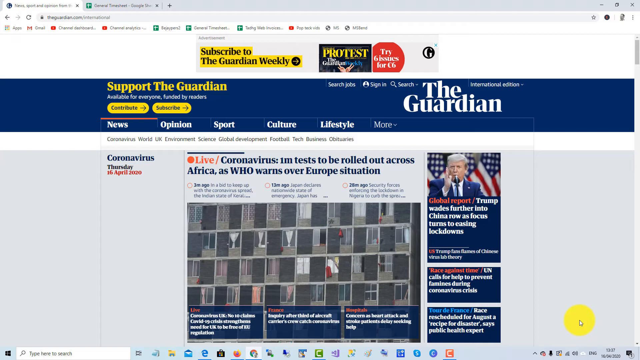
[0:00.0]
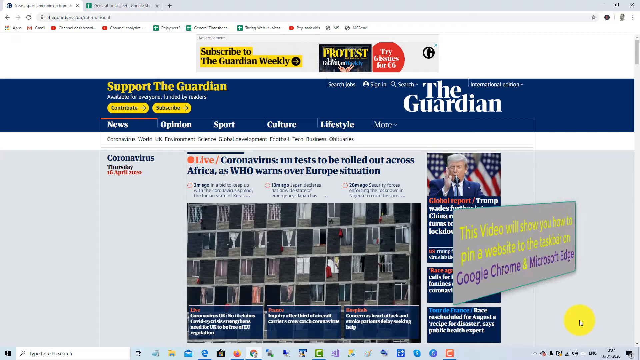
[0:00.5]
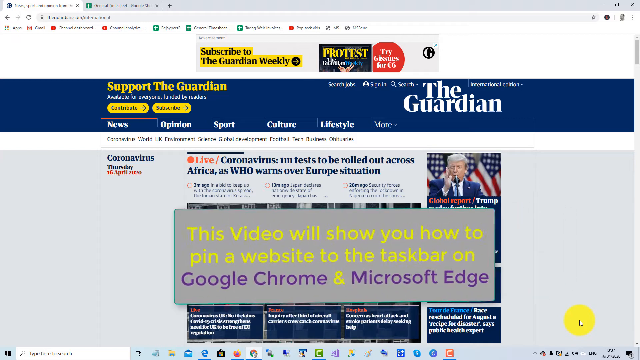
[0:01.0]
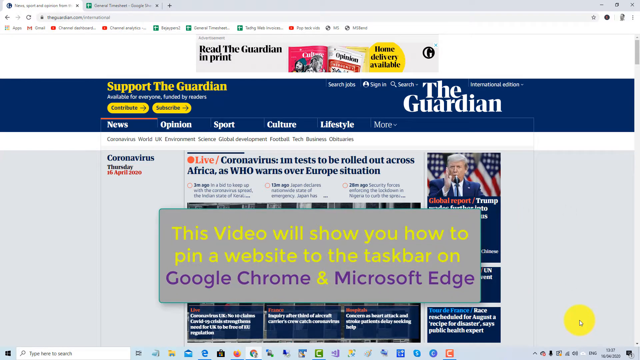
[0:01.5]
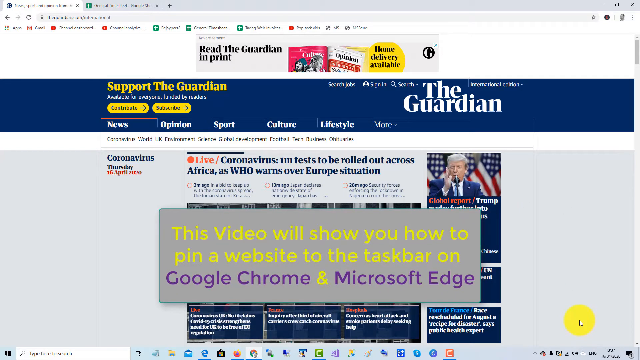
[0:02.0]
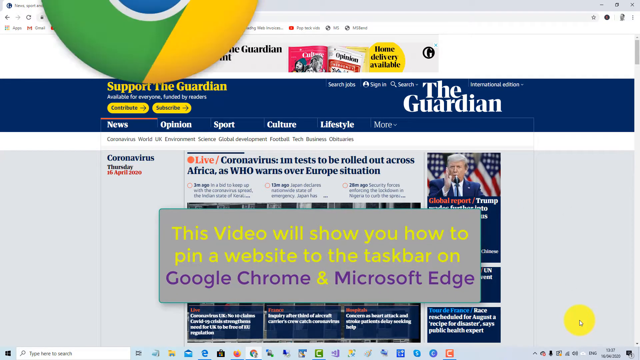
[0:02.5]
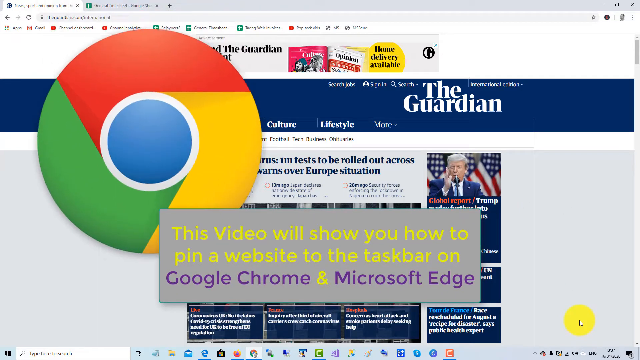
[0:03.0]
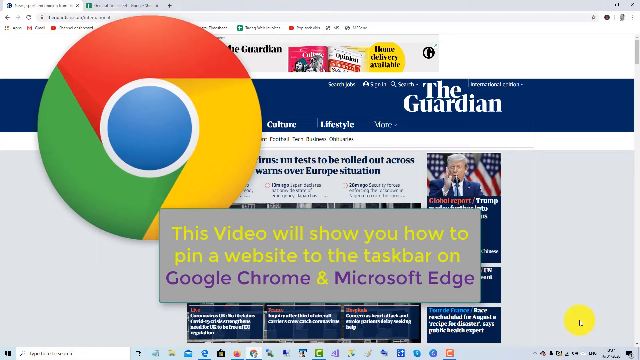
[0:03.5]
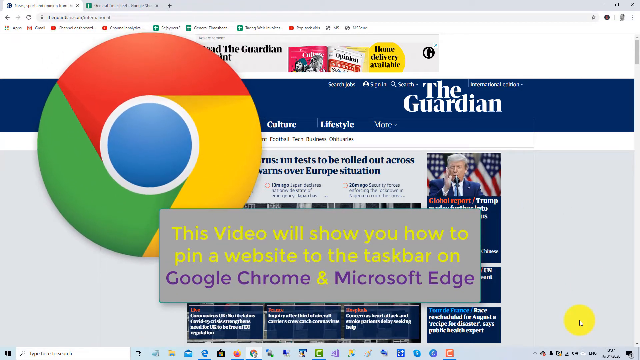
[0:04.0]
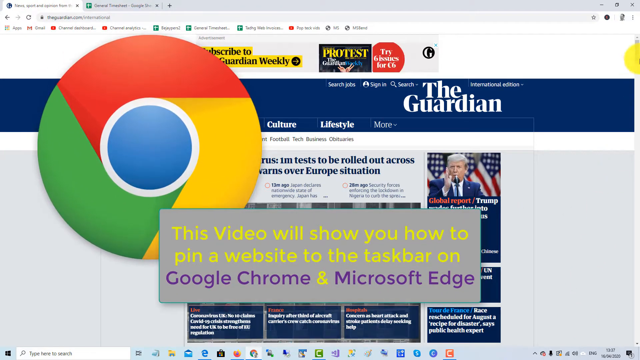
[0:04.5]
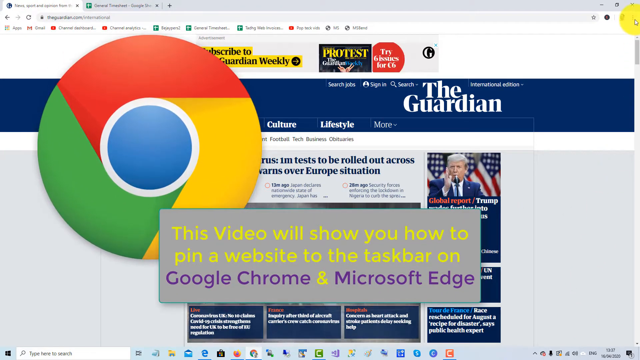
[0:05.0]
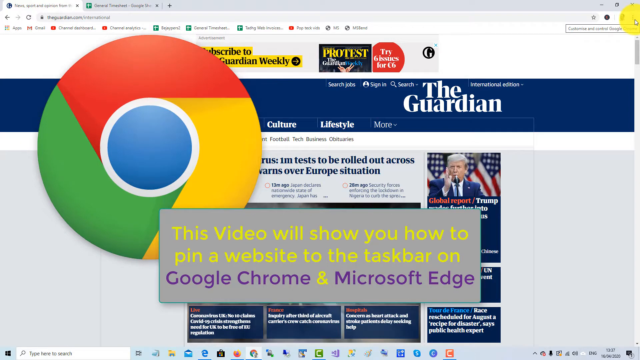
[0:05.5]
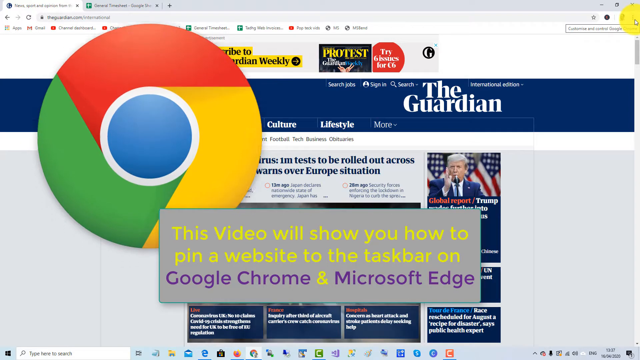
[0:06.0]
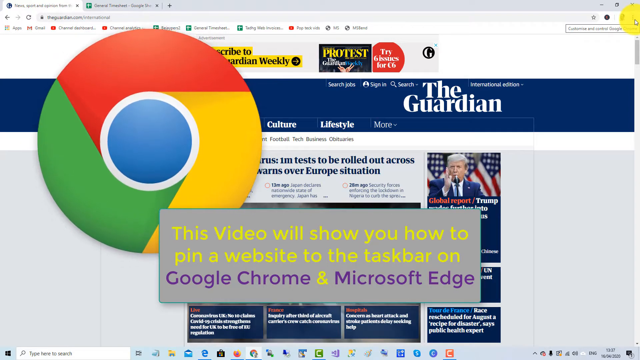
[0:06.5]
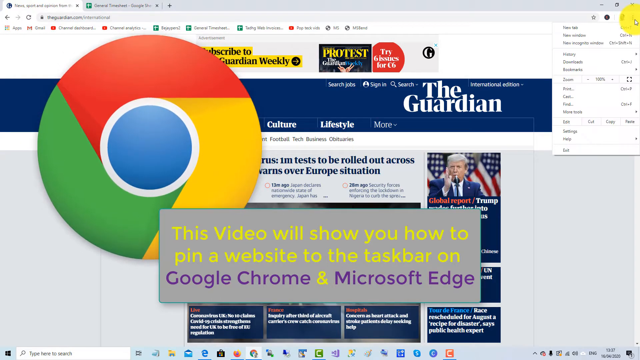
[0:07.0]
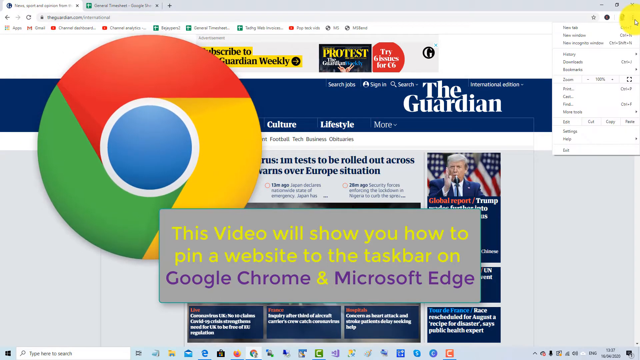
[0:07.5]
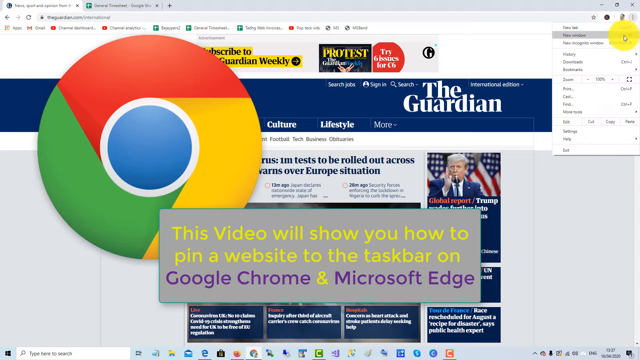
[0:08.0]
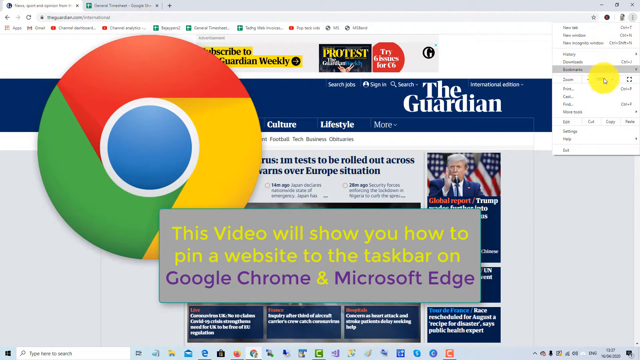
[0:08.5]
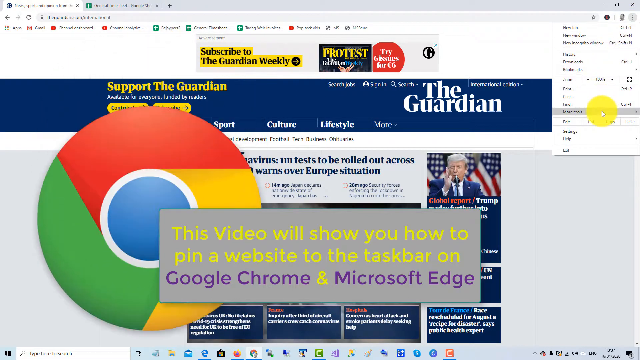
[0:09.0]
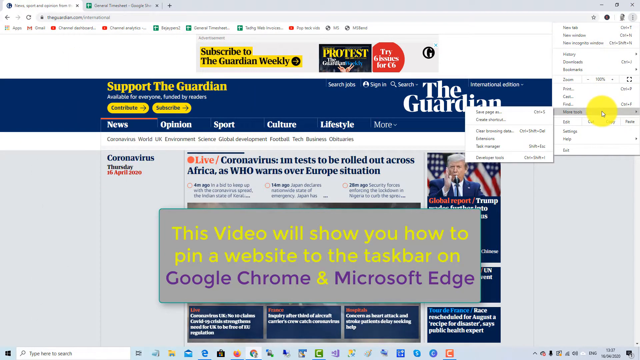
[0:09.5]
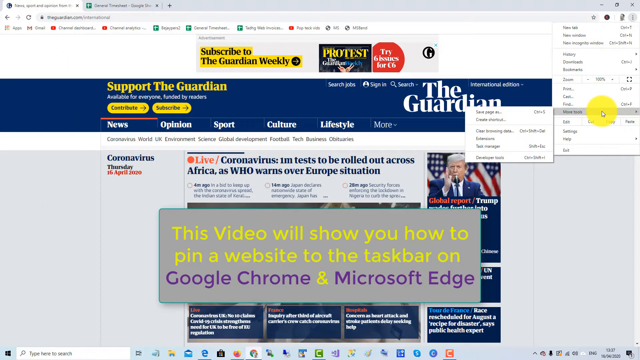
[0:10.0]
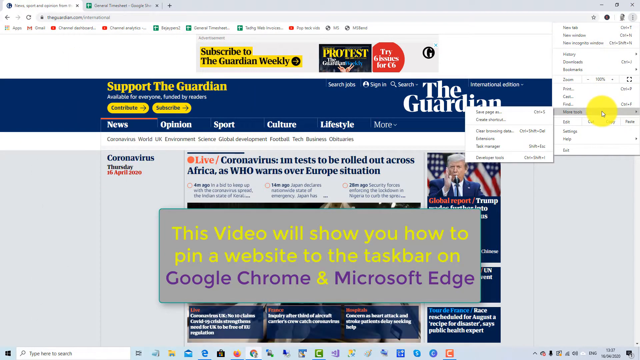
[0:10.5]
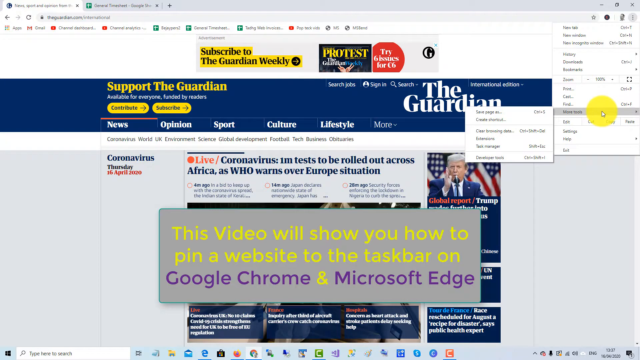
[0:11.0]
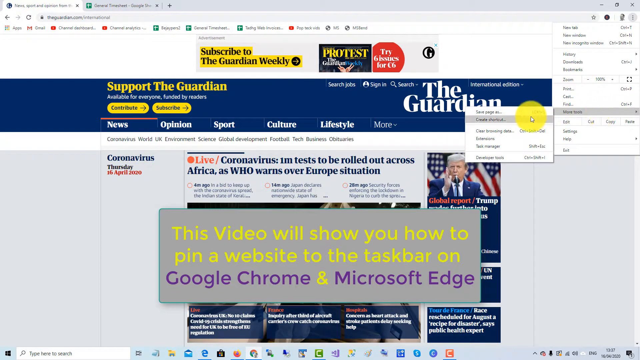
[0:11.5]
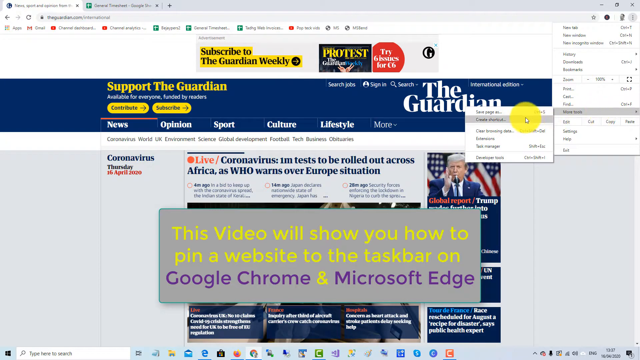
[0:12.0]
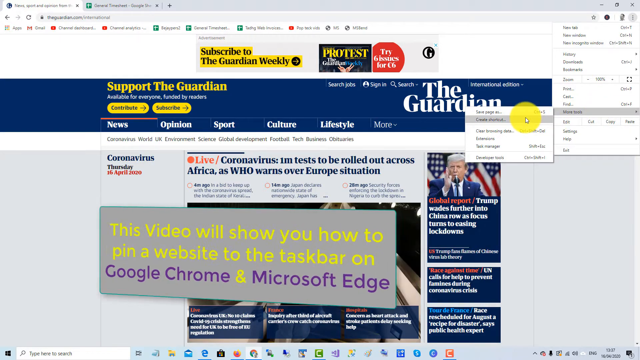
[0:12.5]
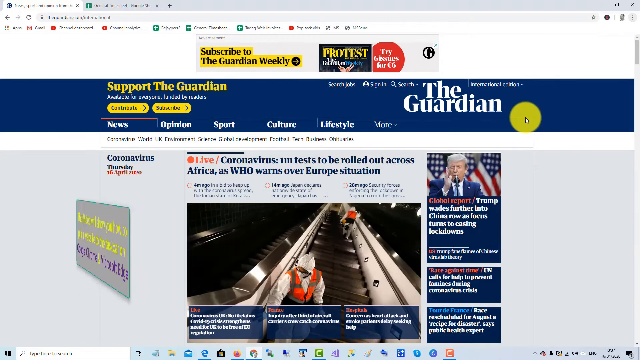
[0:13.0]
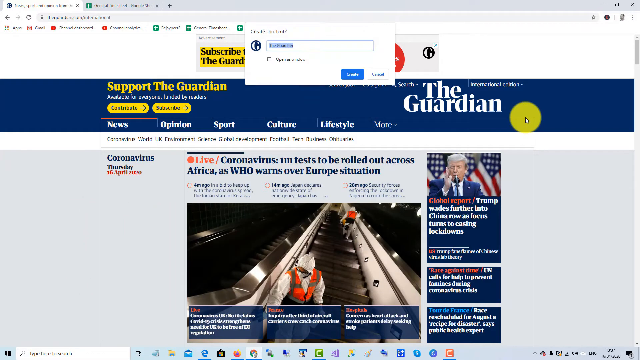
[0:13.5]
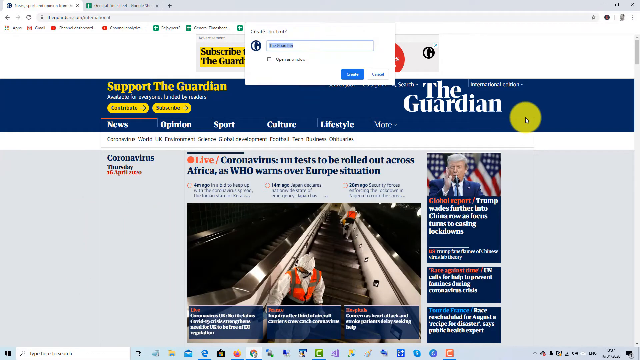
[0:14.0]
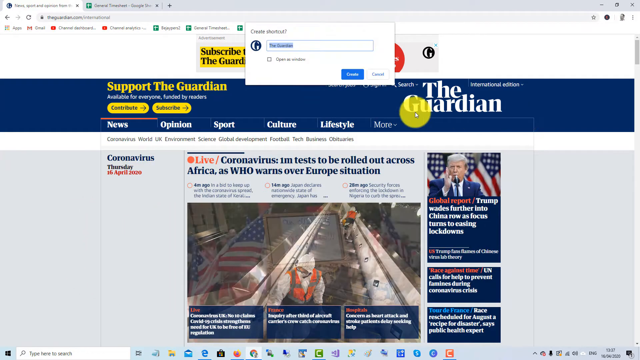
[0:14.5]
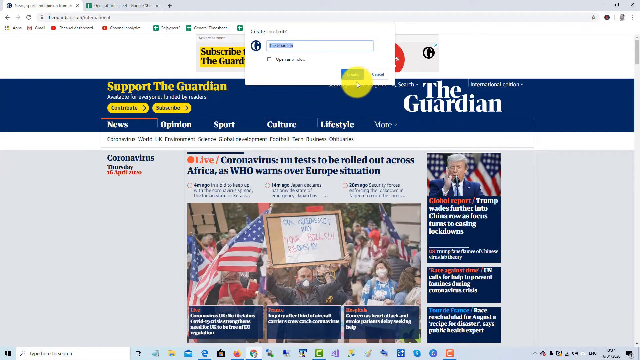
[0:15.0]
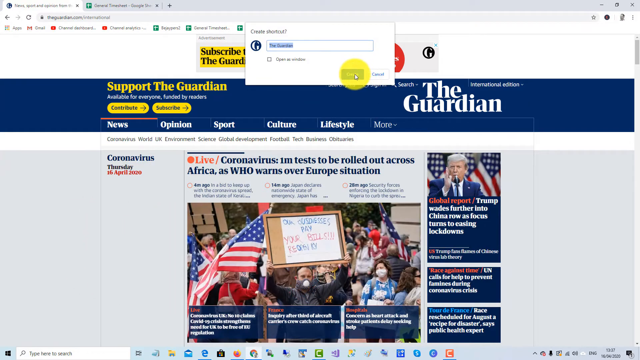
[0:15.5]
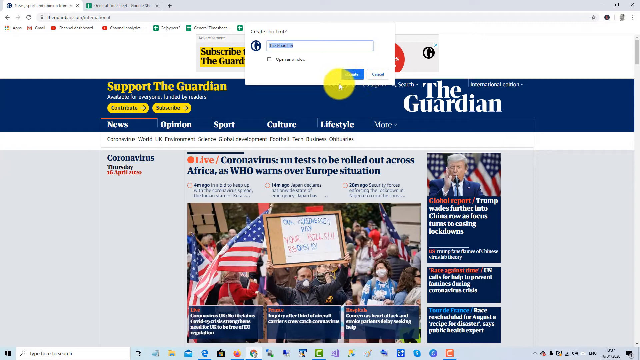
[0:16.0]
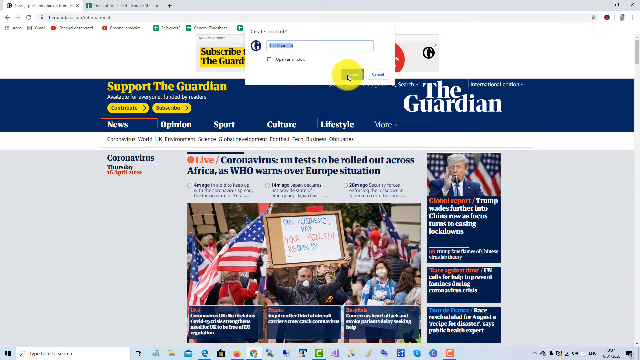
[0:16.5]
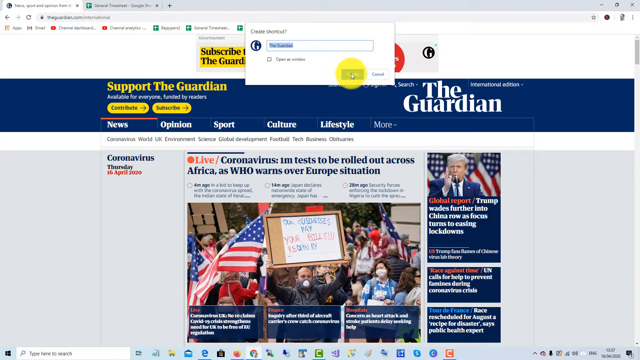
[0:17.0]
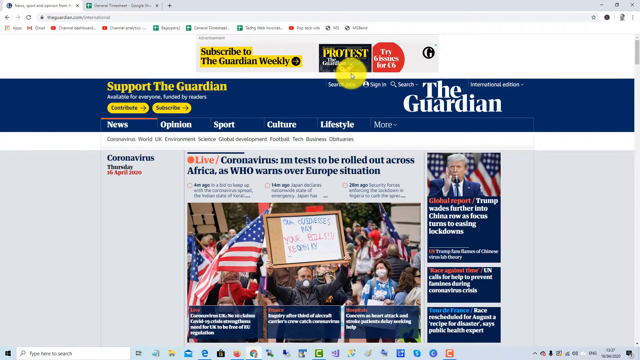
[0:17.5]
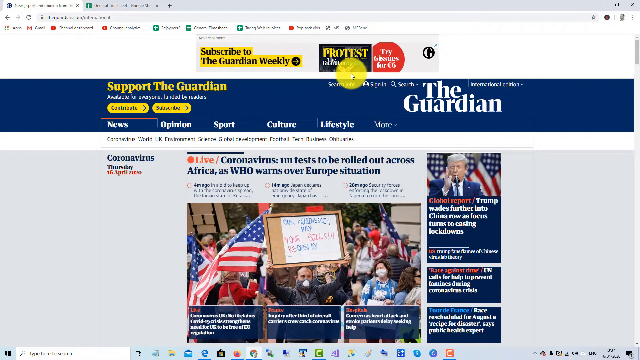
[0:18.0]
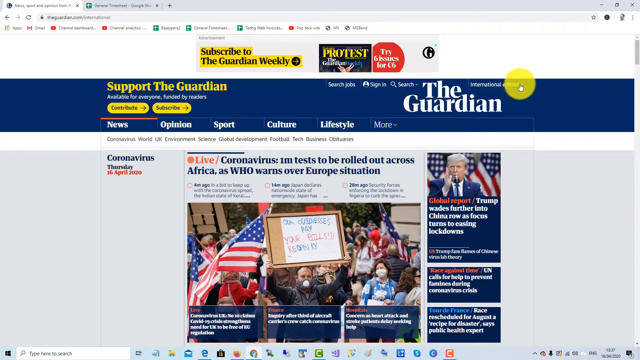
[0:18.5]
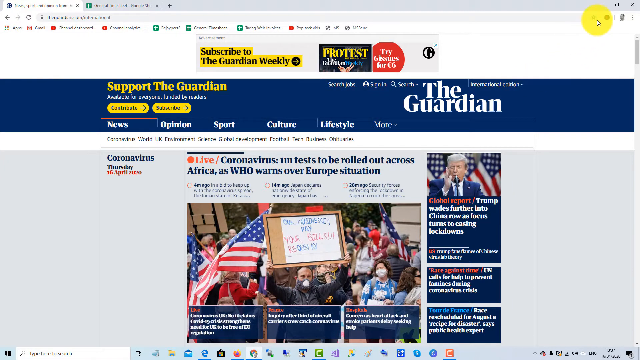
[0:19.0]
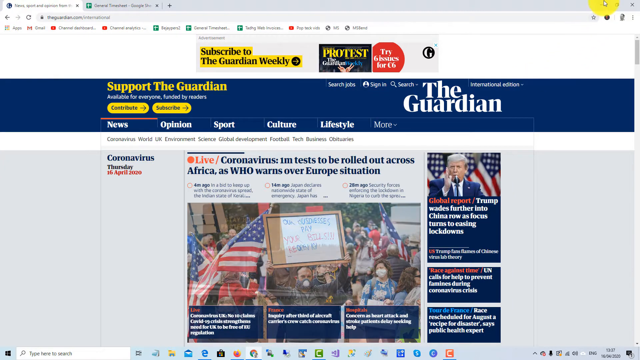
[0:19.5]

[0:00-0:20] The Google Chrome symbol appears, along with the text "this video will show you how to pin a website to the taskbar", and a demonstration of how to do it follows on a laptop. Text reads "Thank you for watching, please like the video, share it with your friends, subscribe to the Guardian weekly". The lettering is too small to make out exactly where to click, but the cursor clicks on the corner. A clip appears with the written text "coronavirus 1 million tests to be rolled out across Africa". Text reads "This video will show you how to pin a website to the taskbar on the Google Chrome and Microsoft Edge". Items are clicked and opened, and something is typed in.